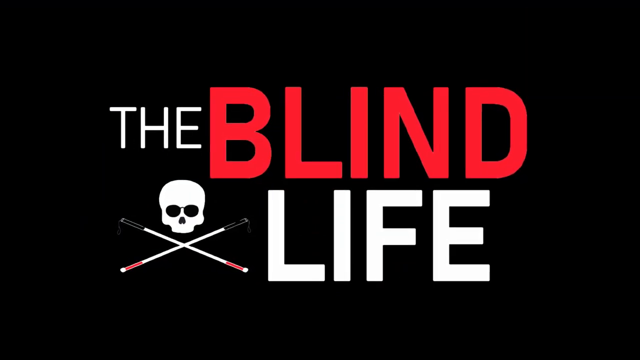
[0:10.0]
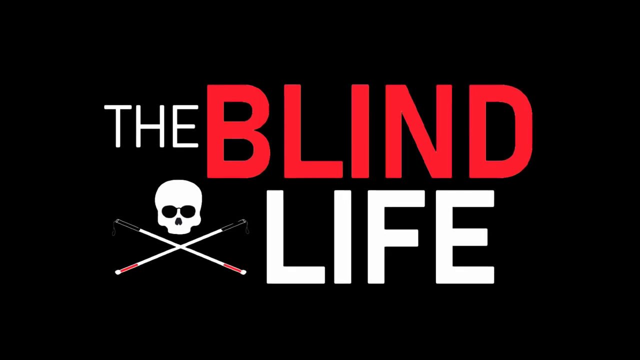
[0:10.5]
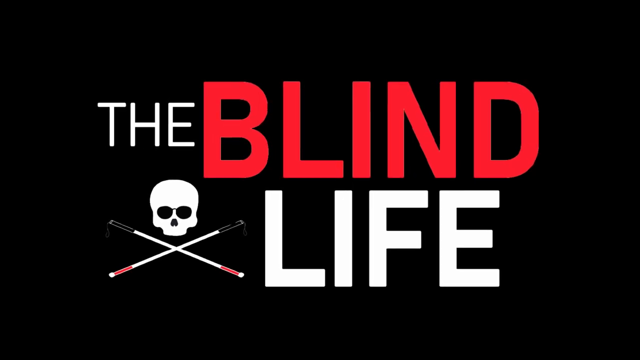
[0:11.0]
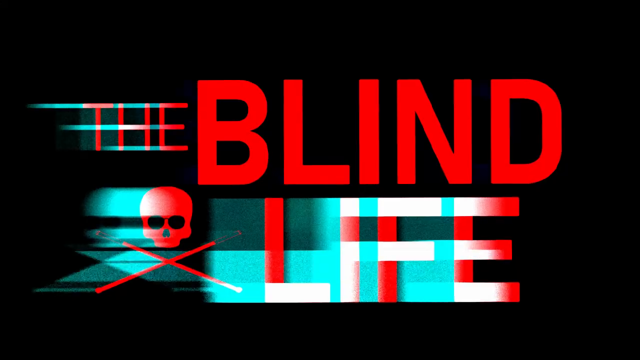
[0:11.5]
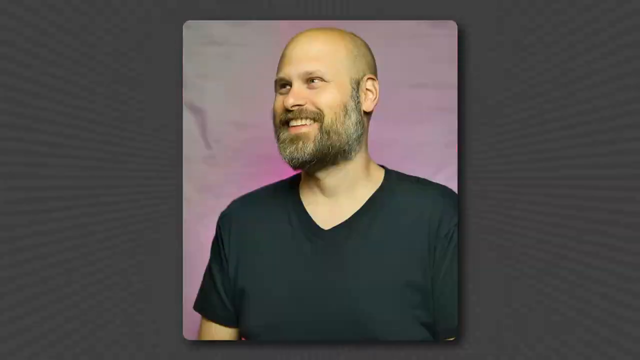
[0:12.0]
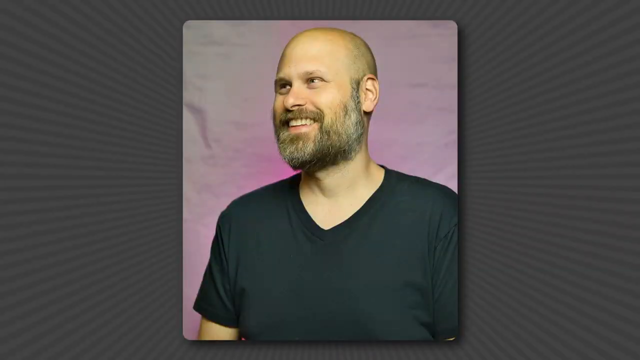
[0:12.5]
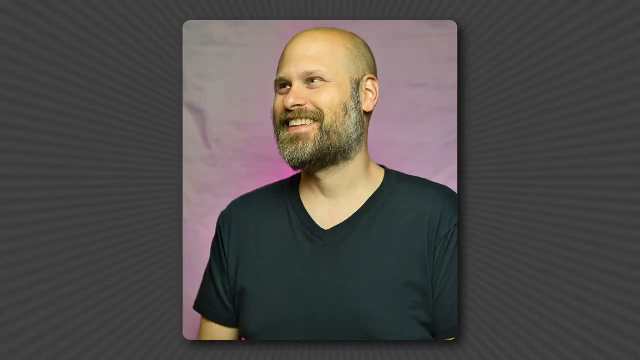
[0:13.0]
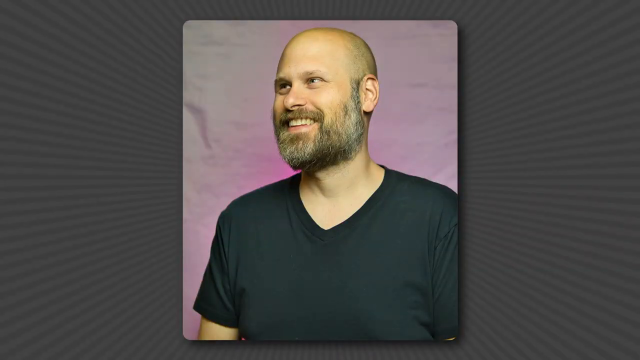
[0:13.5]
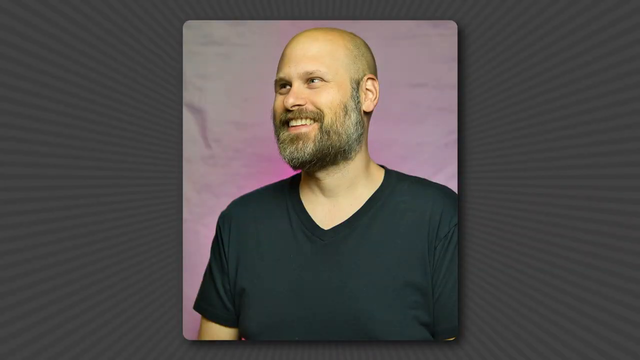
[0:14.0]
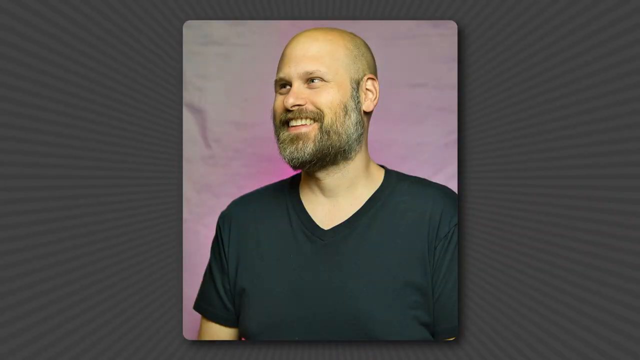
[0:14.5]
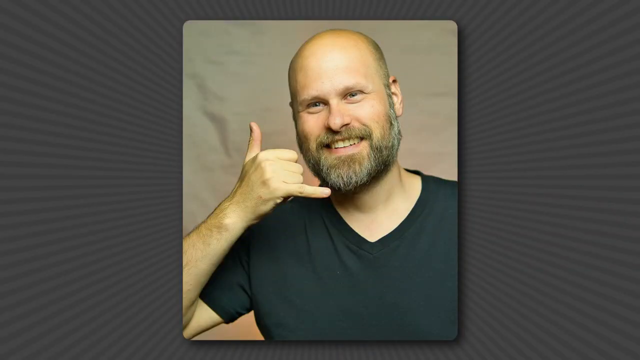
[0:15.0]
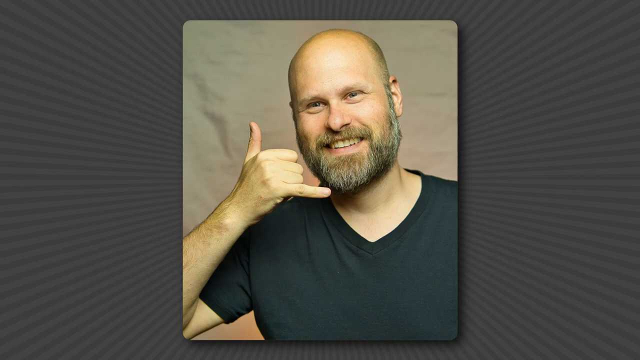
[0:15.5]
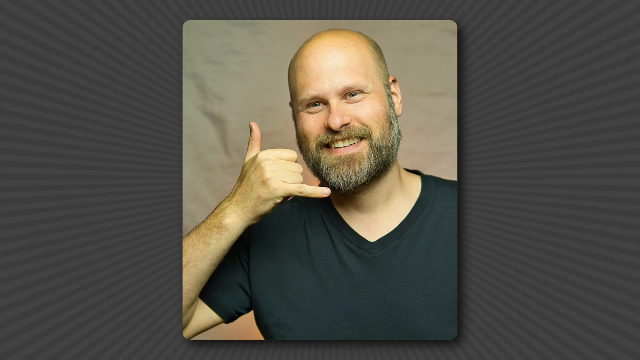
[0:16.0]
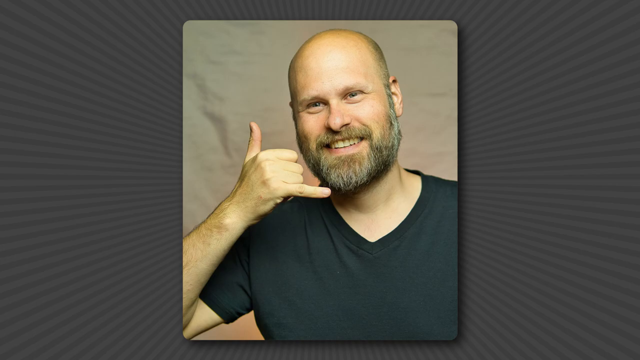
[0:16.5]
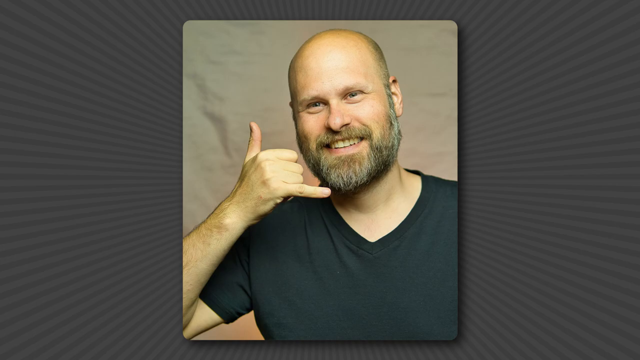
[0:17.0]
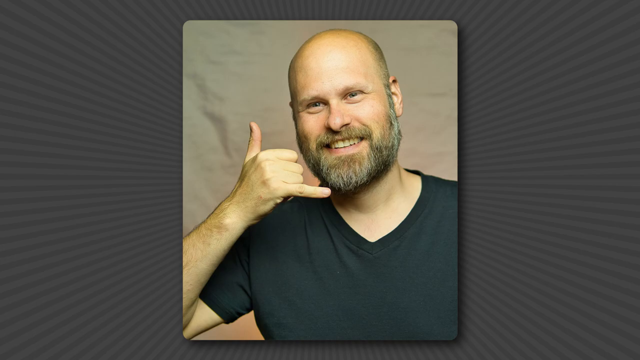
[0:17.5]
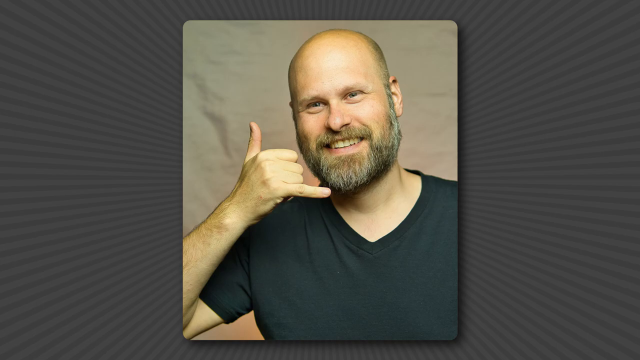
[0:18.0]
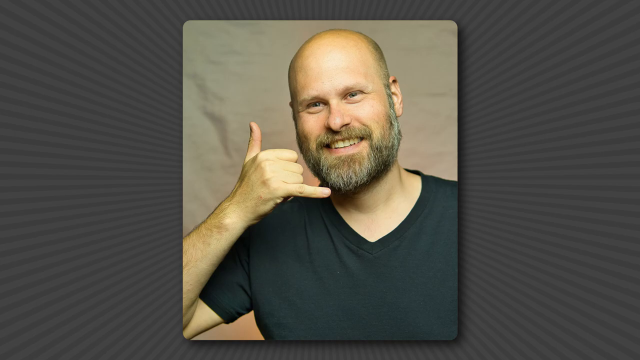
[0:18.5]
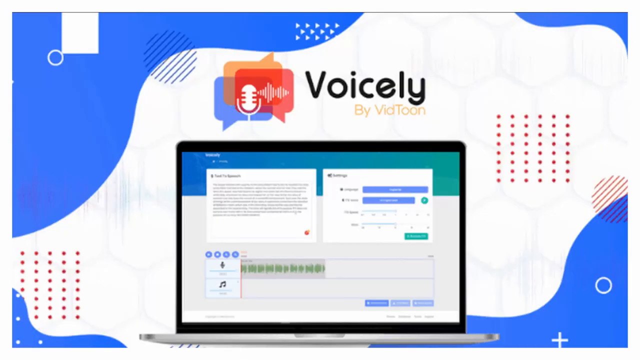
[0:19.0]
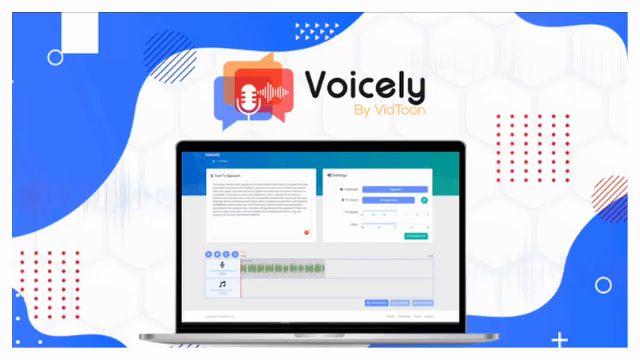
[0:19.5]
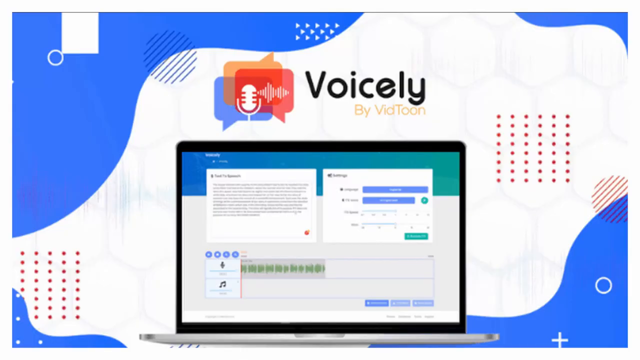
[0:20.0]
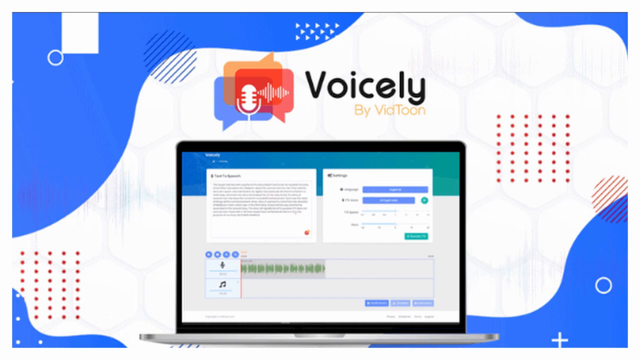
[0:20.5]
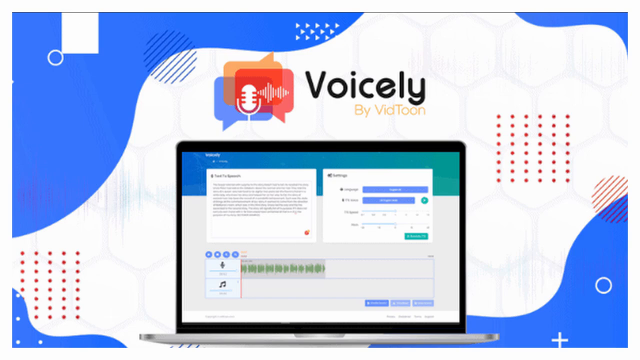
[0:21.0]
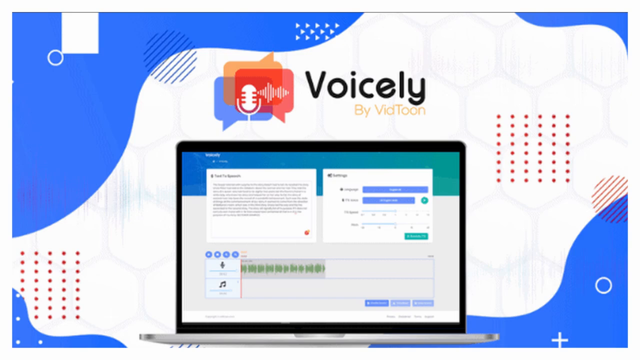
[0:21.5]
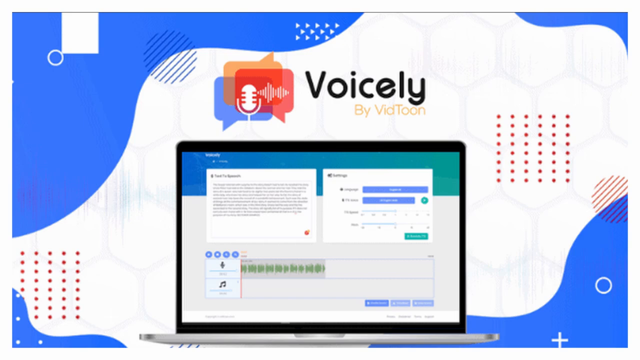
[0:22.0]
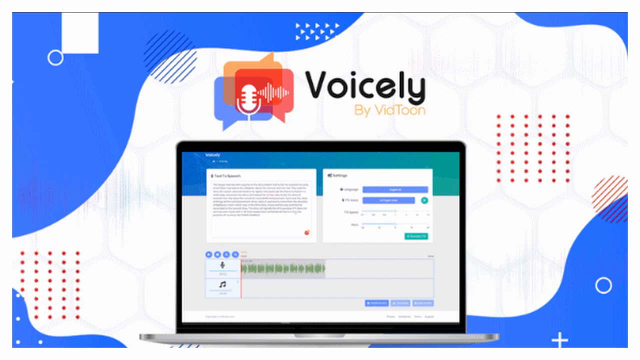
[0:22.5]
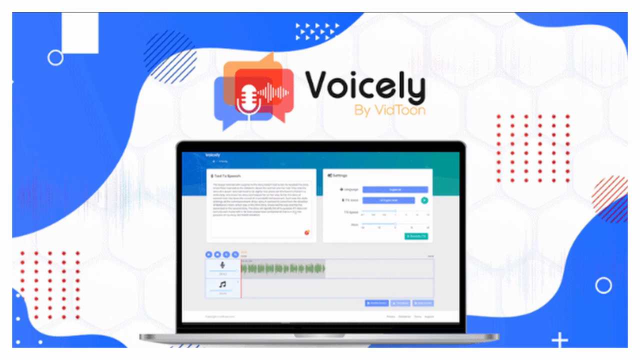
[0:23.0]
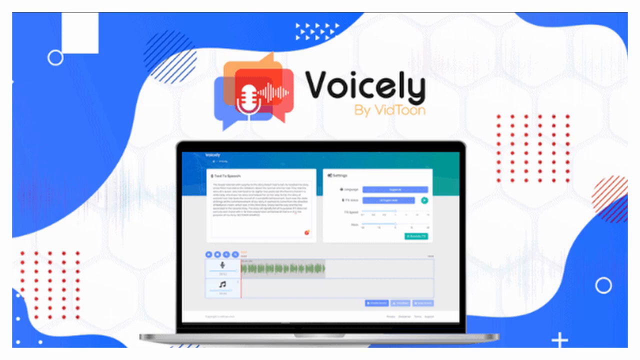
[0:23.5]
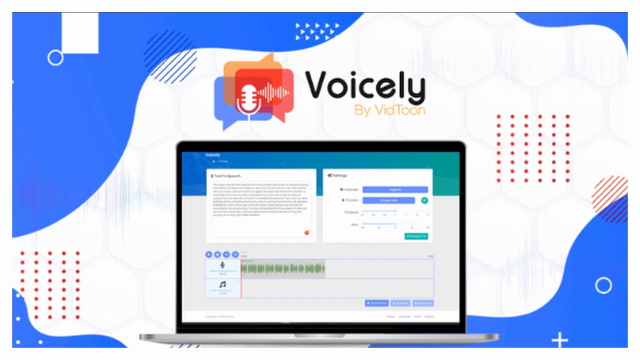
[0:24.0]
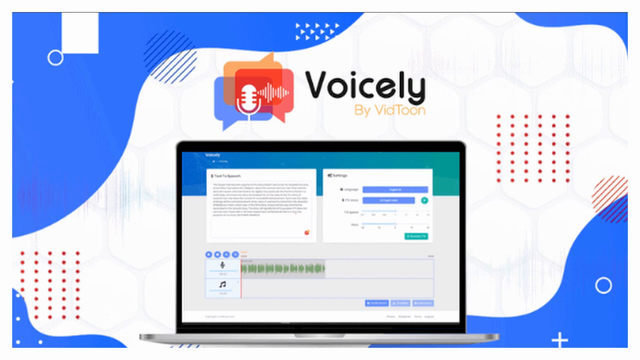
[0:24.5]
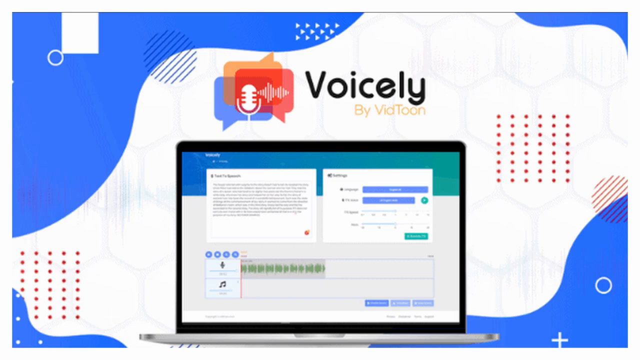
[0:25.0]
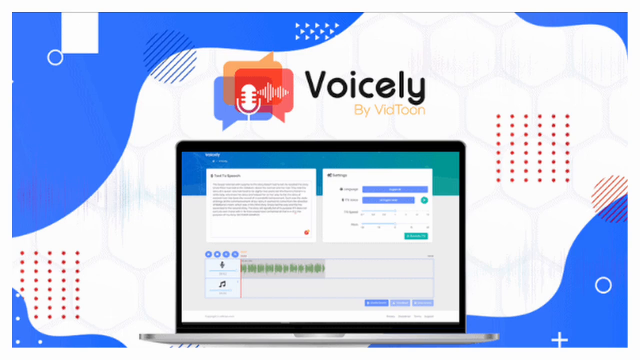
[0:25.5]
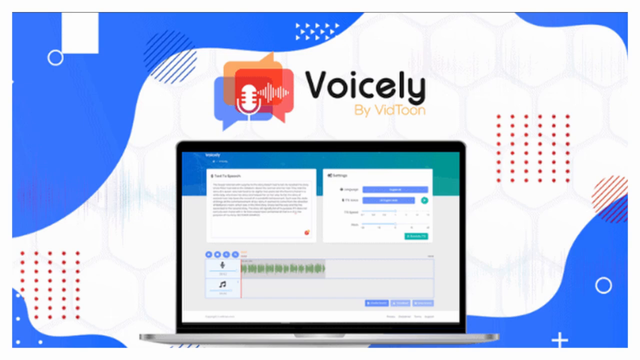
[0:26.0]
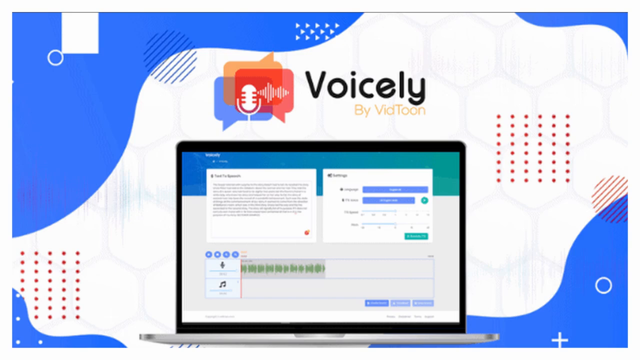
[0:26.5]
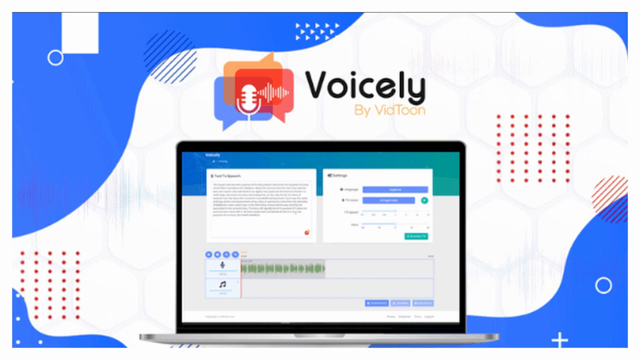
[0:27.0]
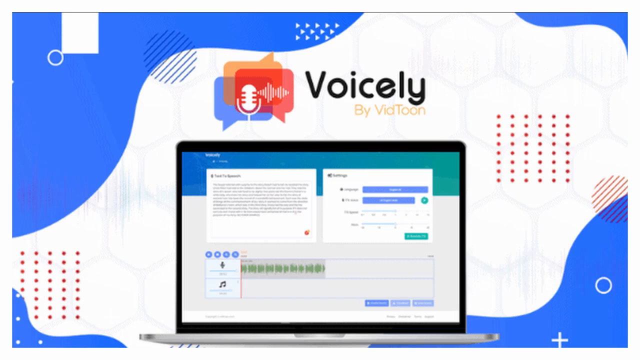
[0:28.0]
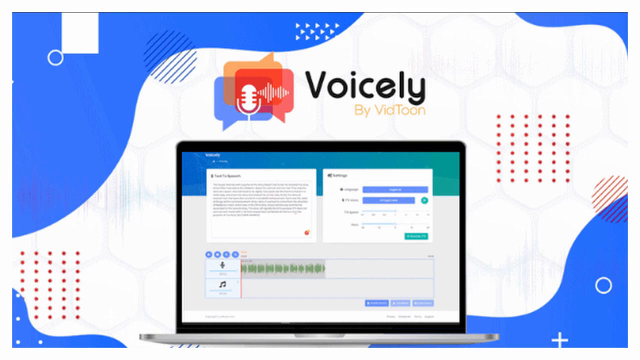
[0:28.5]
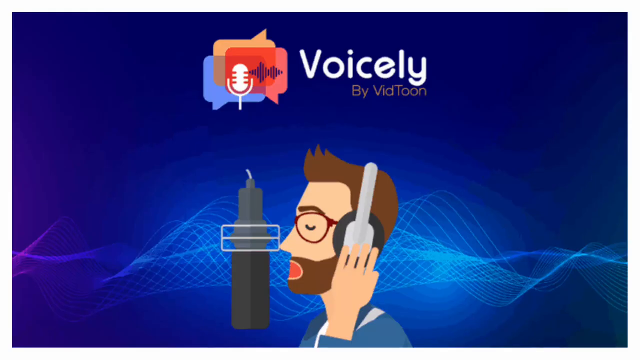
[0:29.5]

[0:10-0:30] The camera zooms in on The Blind Life logo, then a graphics effect crosses the screen, the image judders, and it is replaced by a still photograph of a man. He is a white, bald man with a salt-and-pepper beard who looks to be around 45 to 55 years old. He wears a black t-shirt, is stood in front of a purple background, and gazes off into the distance. This cuts to another photo of the same man miming with his hand as if holding a telephone. Next comes a screenshot taken from a computer with colourful graphics; the page is mainly blue and white. A logo says "Voicely by VidTune", and next to it is an image of a microphone with sound waves coming out of it. There is also an image of a screen that looks similar to the website screen shown at the start; its text is low resolution, soft and blurry, and cannot be read. This stays on screen for quite a long time. Then a full-page logo appears with "Voicely by VidTune" at the top and, underneath, a cartoon-style digital drawing of a man wearing headphones and speaking into a microphone.